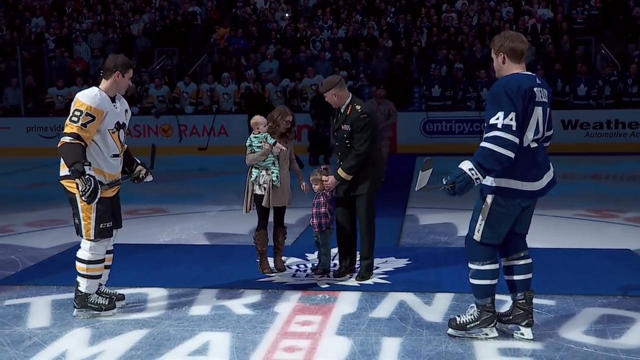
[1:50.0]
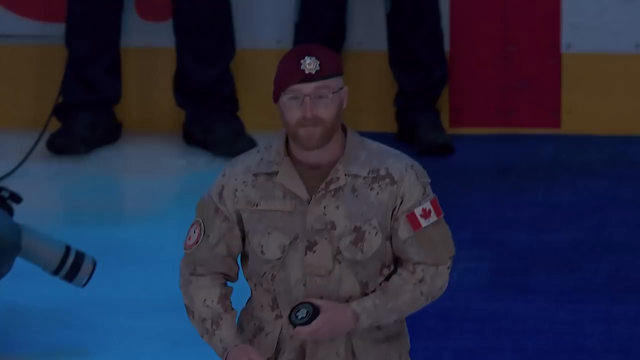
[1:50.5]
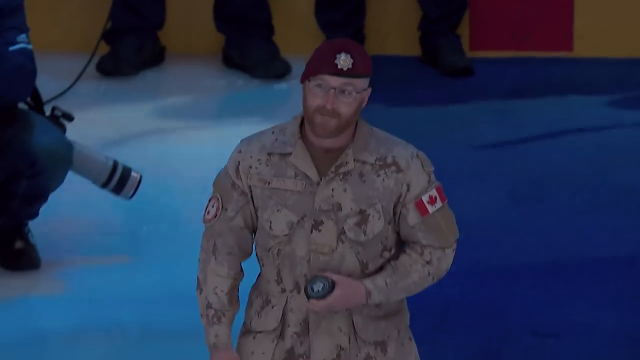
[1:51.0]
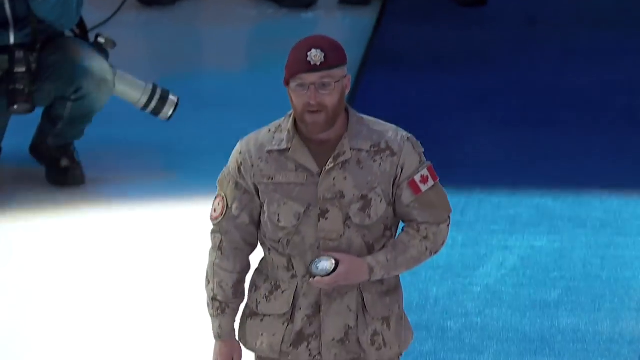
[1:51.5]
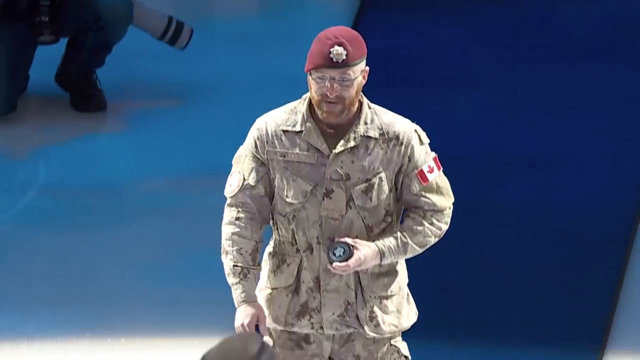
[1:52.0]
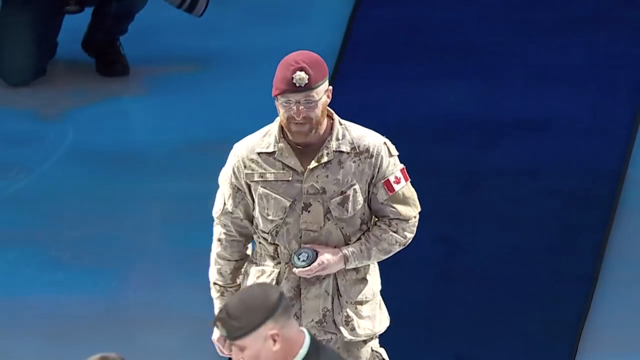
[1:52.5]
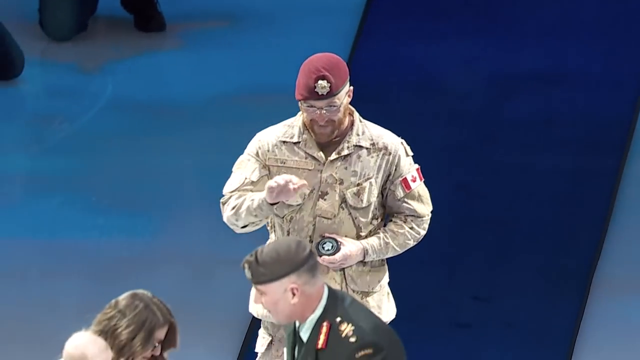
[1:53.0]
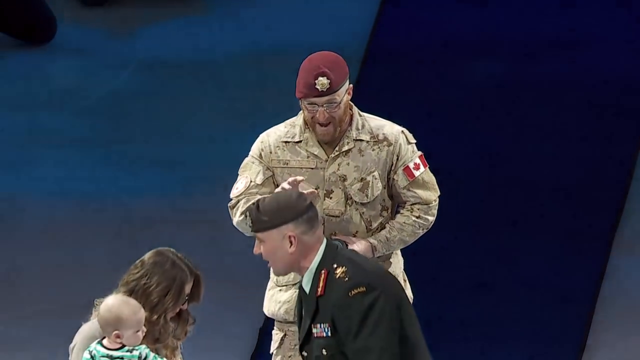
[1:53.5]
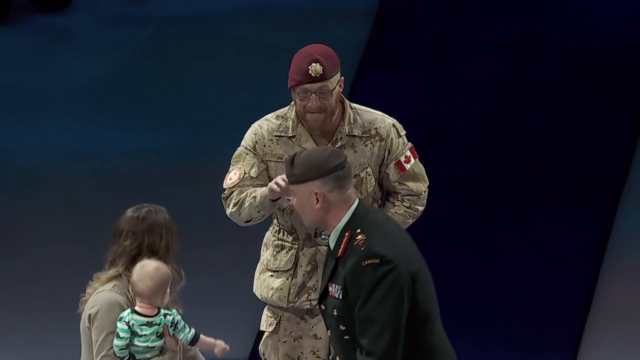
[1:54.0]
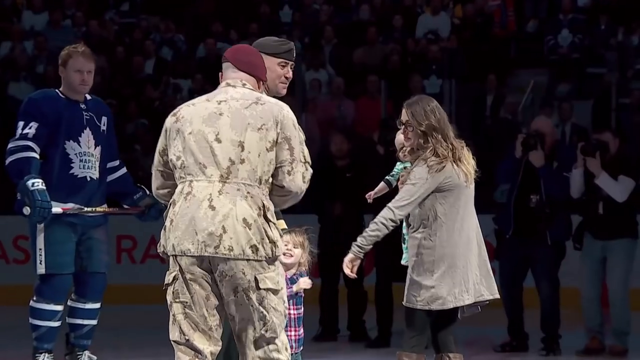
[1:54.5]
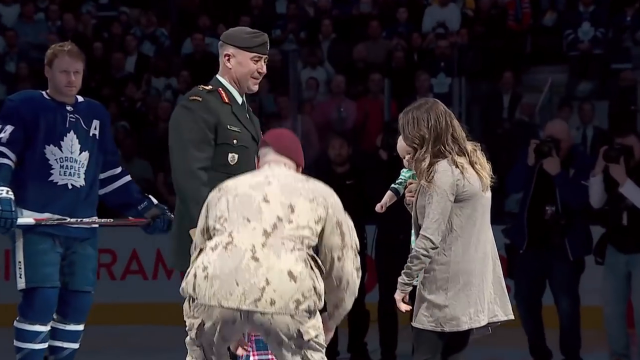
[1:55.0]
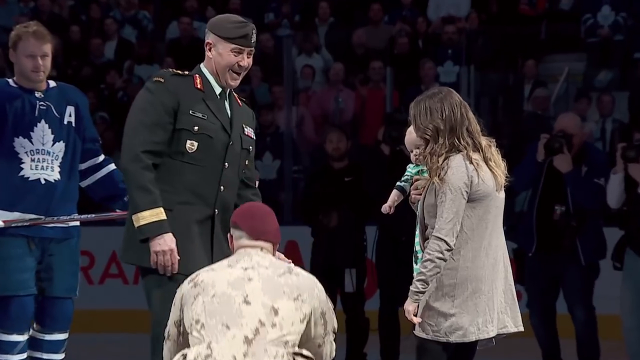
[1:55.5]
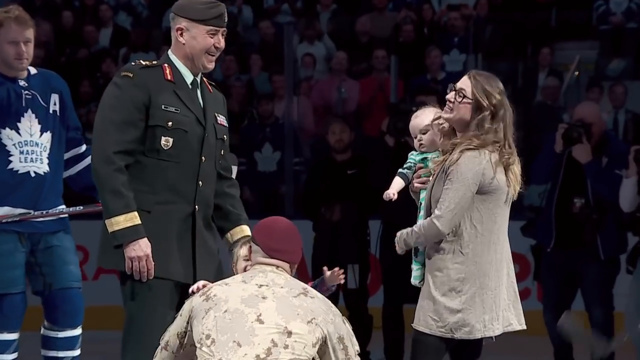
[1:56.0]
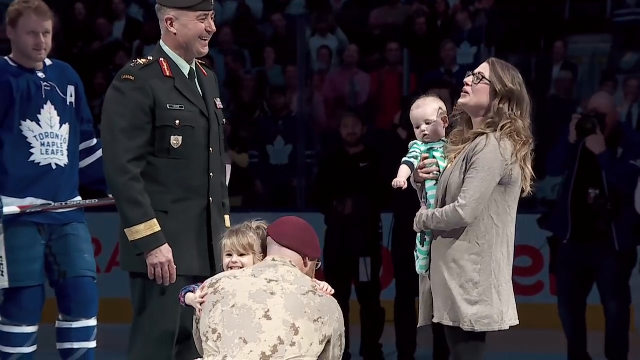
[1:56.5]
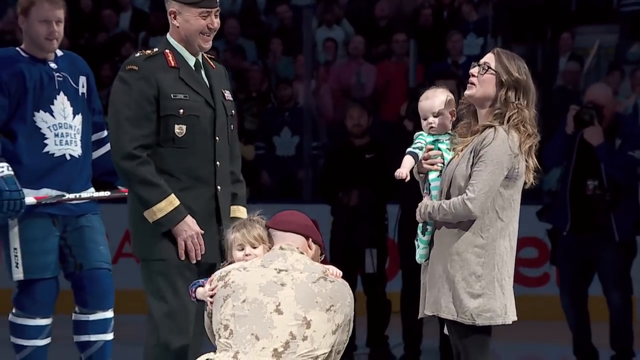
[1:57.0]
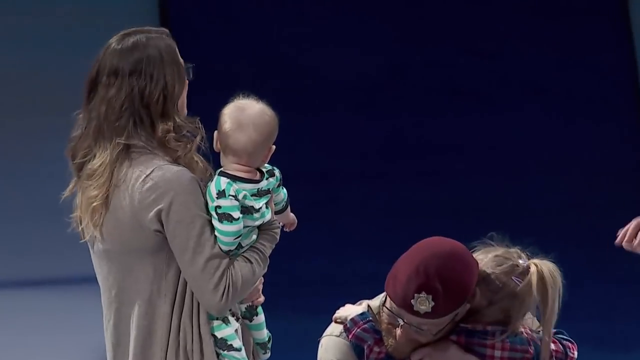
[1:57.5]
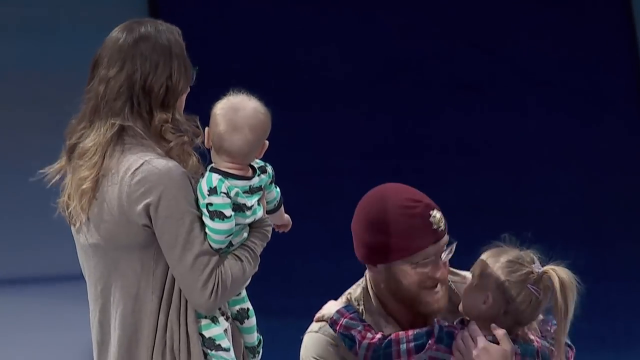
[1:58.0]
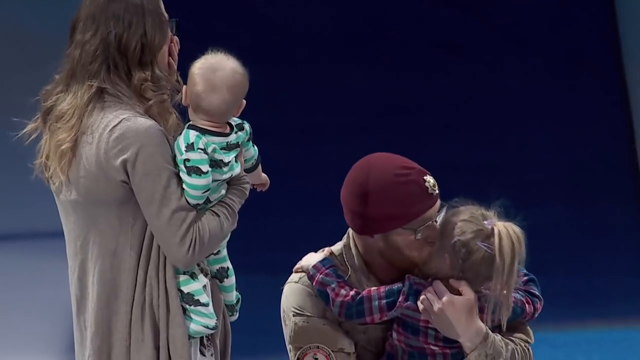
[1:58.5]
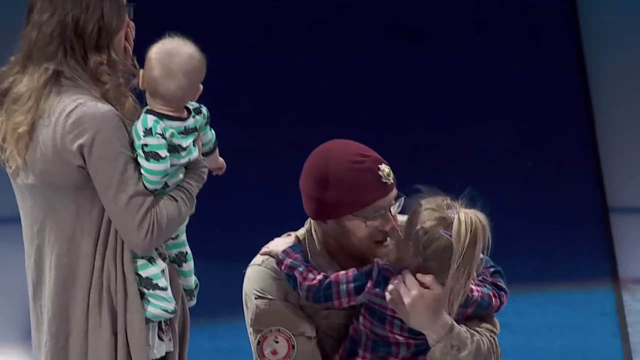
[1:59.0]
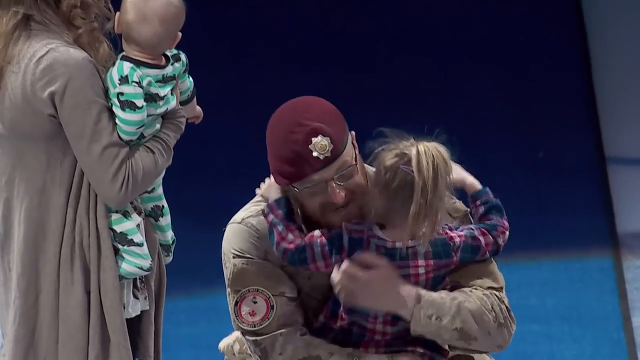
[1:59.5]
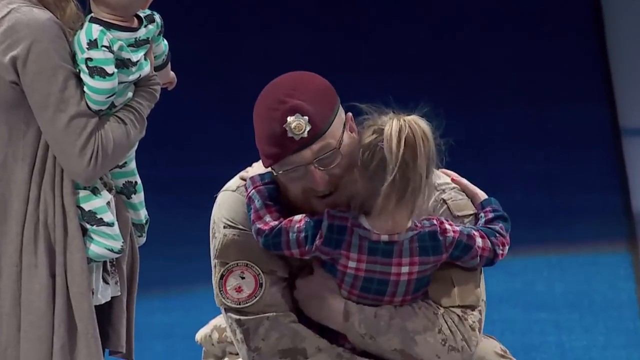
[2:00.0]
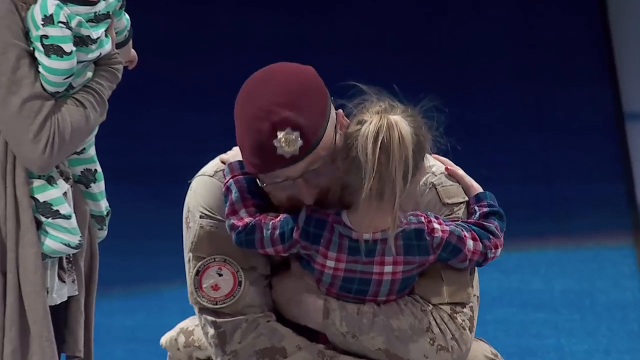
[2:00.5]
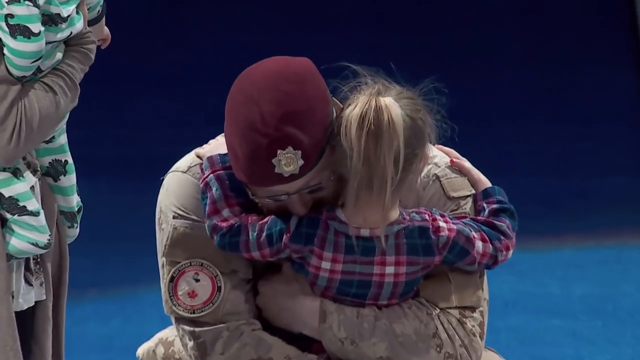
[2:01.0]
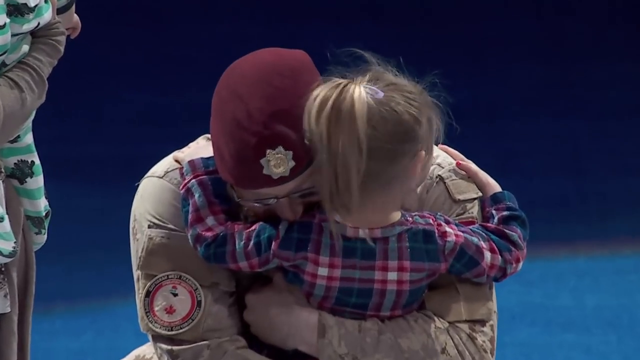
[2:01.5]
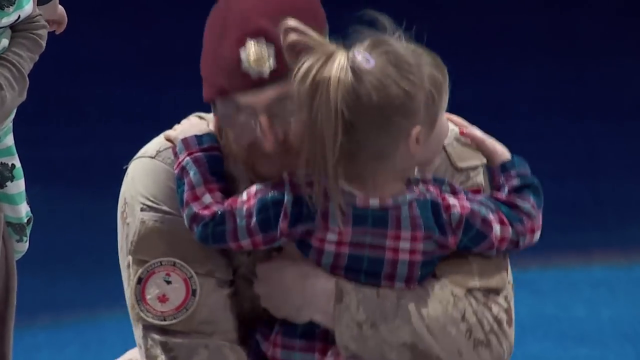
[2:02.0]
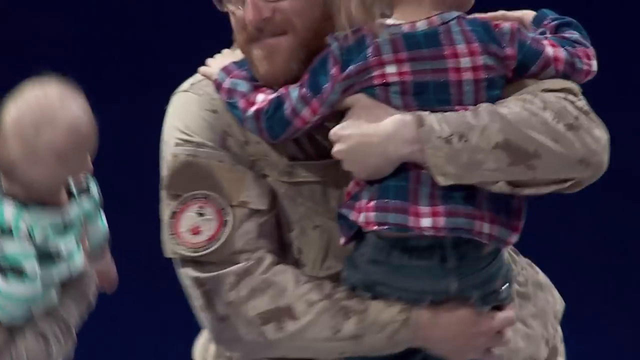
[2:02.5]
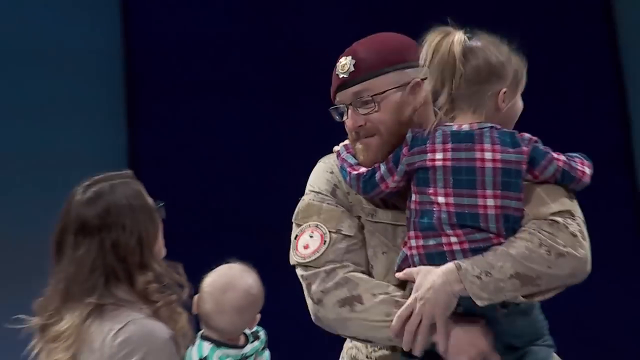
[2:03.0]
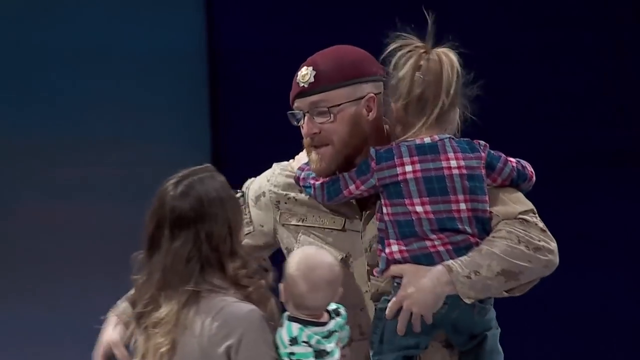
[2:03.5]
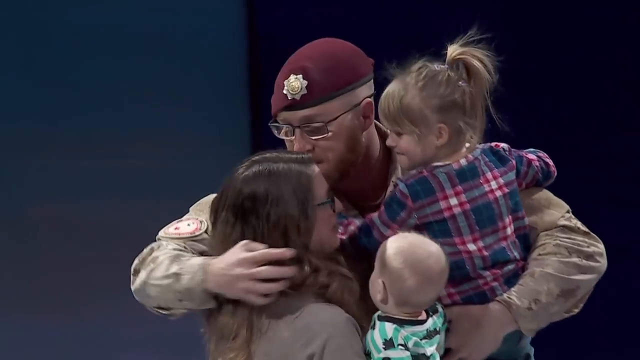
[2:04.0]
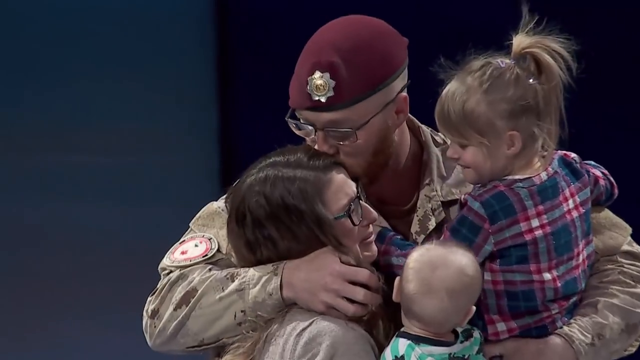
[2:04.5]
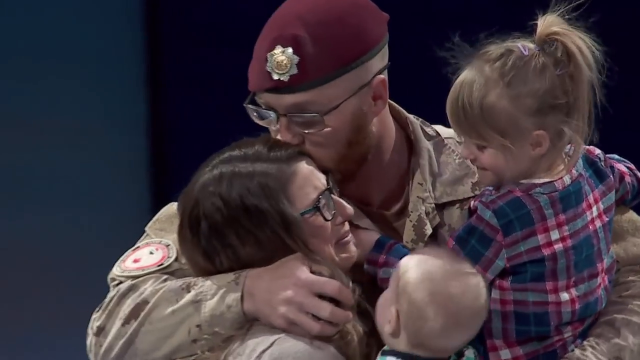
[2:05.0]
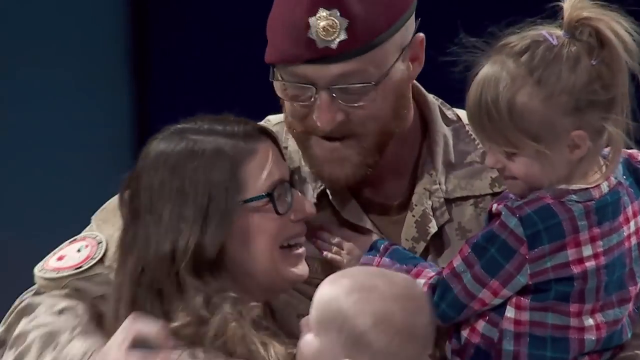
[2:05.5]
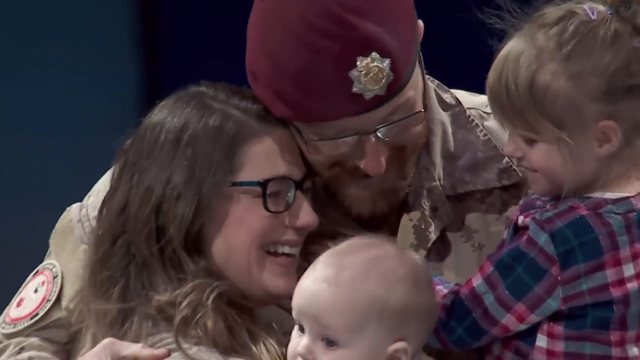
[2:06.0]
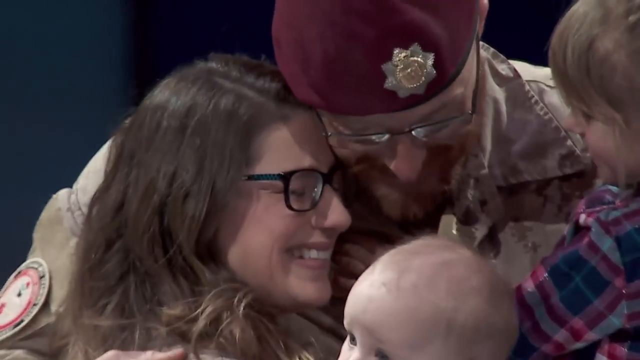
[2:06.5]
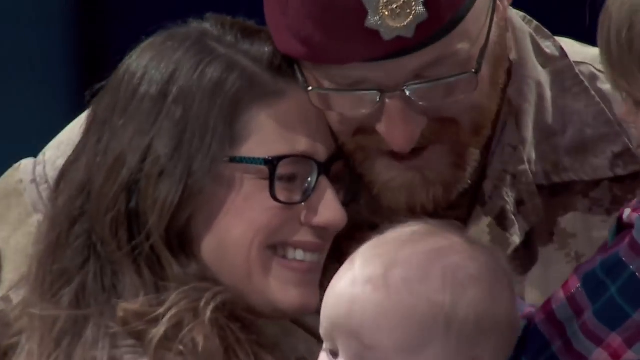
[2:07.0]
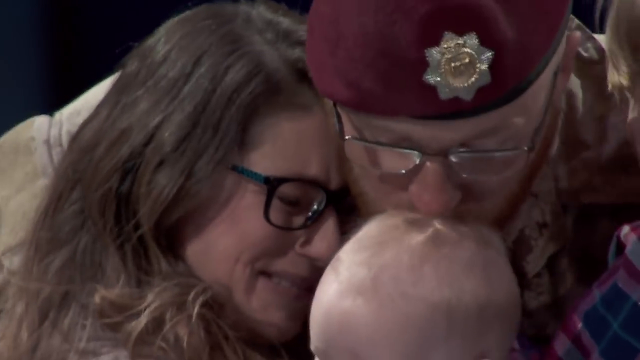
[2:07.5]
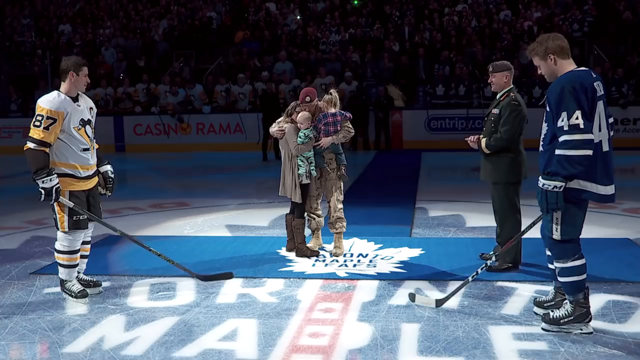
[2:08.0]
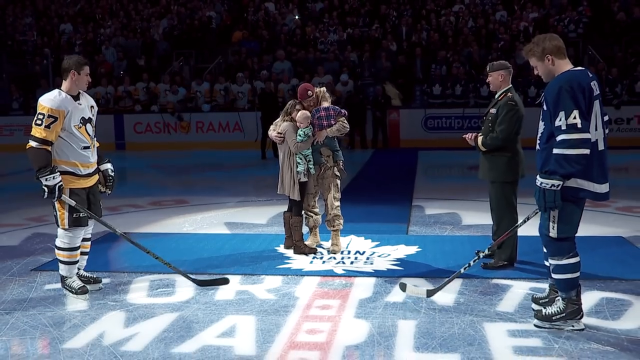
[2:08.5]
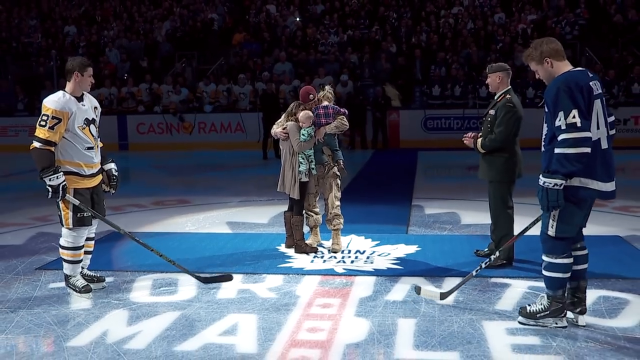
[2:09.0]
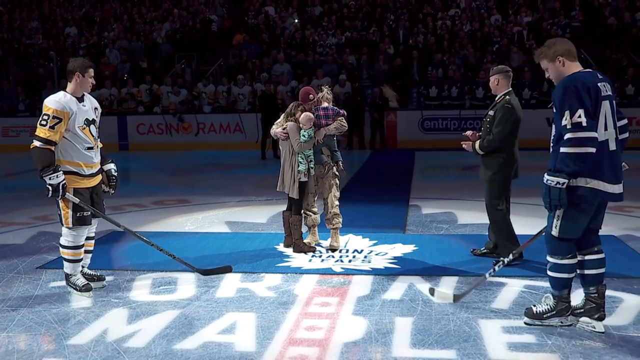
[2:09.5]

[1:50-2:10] A man suddenly walks out with a puck in his hand, coming down the carpet, and the woman is taken by surprise. At first the mom is looking at the little girl; he waves with his right hand and bends down, and she looks taken aback. The older gentleman in uniform on the left looks very happy for them. The baby does not react. The dad moves in, hugs her and kisses her on the side of the face. The daughter puts her arms up over her dad's shoulders; he picks her up and kisses the mom on the side of the face, and she starts crying as he kisses her cheek again, while the baby is not looking. Sidney Crosby looks at her or the family while the other player looks down the ice, and both tap their sticks. The older gentleman, who moved aside when the man walked out to give them space, claps off to the side.